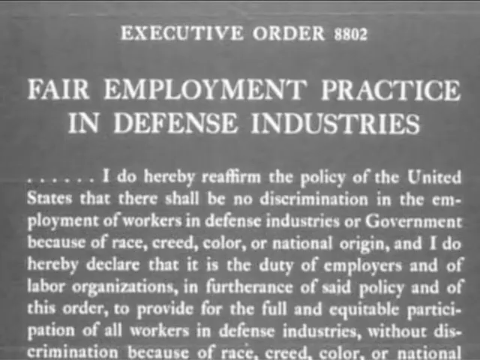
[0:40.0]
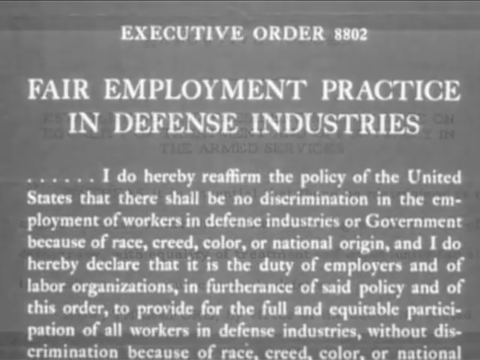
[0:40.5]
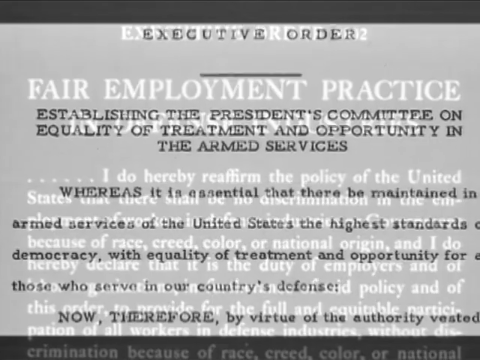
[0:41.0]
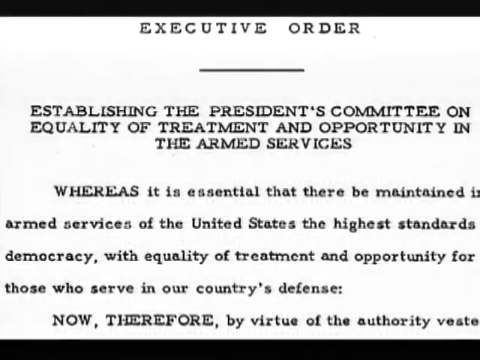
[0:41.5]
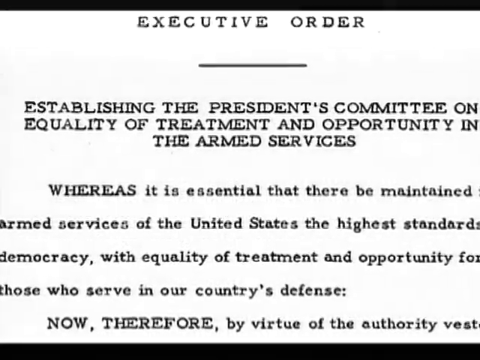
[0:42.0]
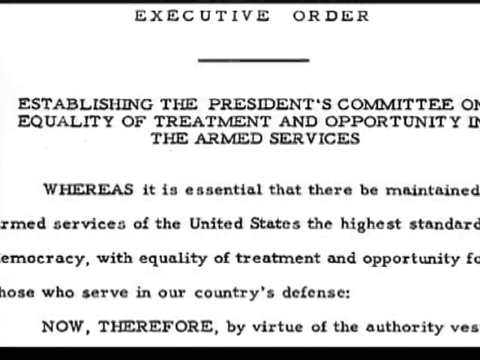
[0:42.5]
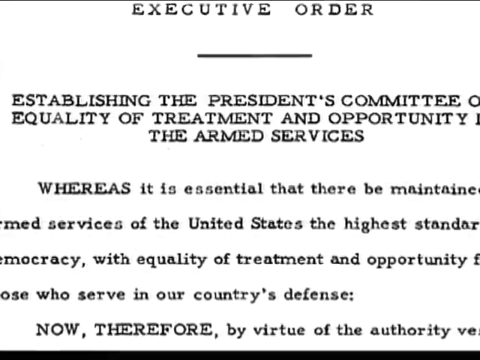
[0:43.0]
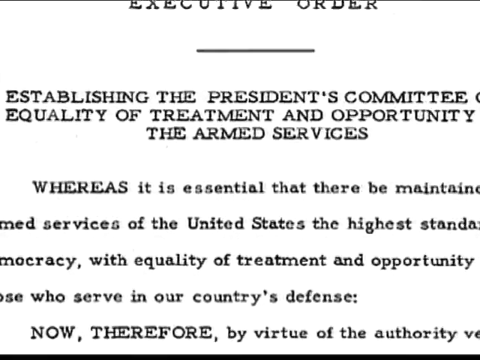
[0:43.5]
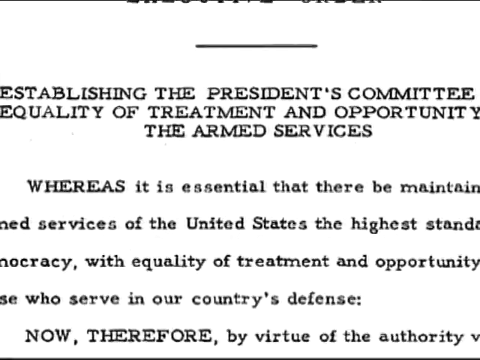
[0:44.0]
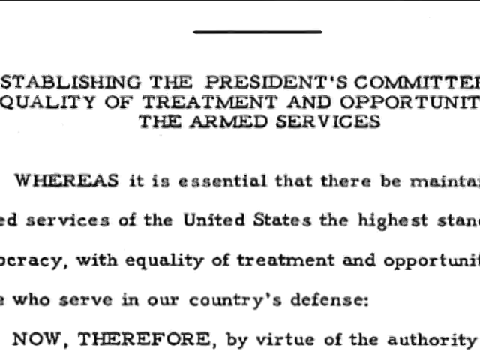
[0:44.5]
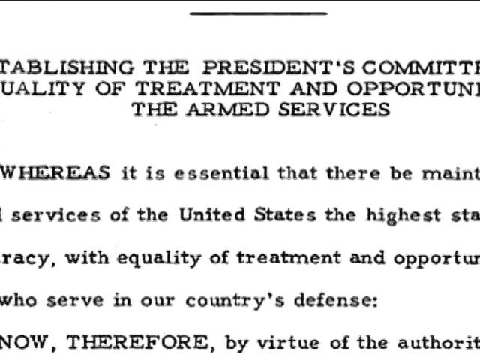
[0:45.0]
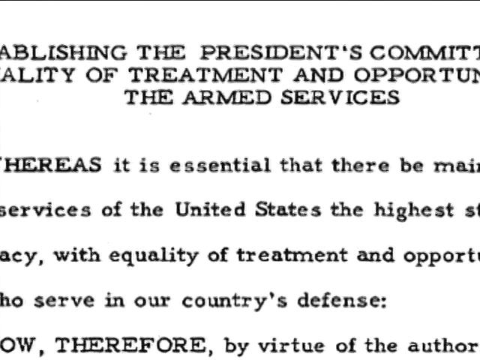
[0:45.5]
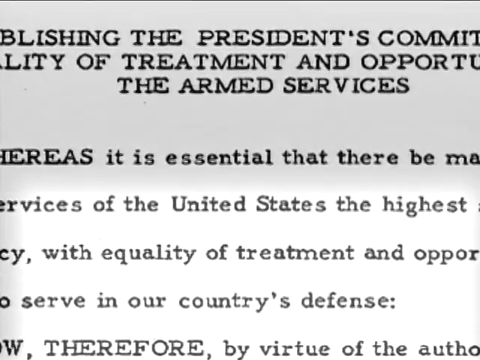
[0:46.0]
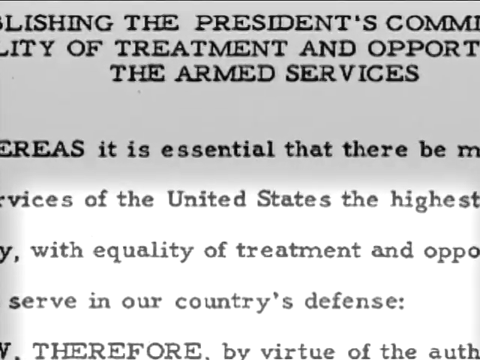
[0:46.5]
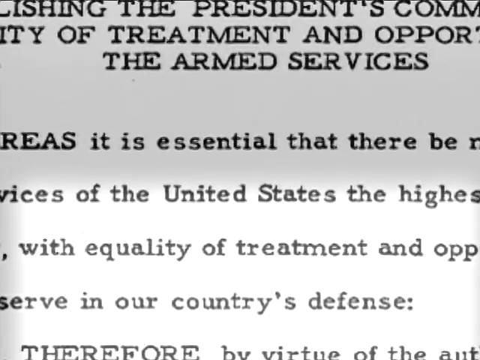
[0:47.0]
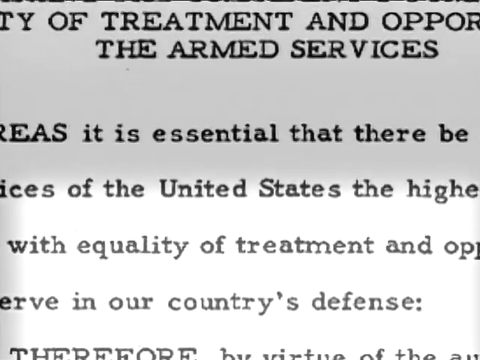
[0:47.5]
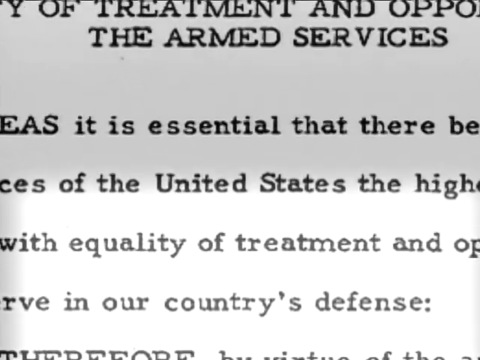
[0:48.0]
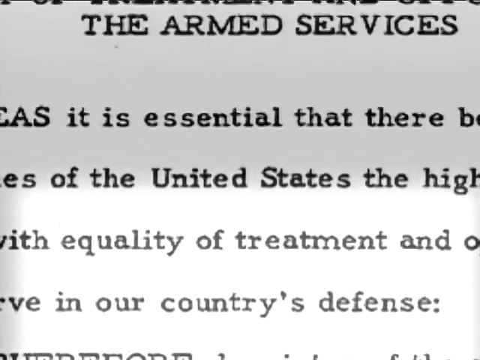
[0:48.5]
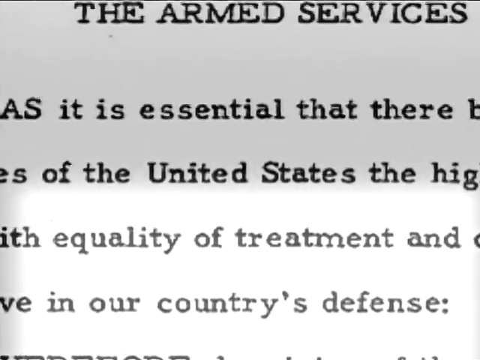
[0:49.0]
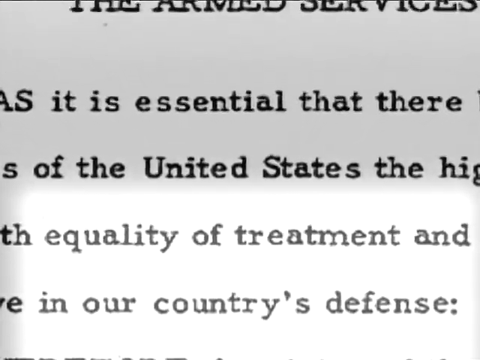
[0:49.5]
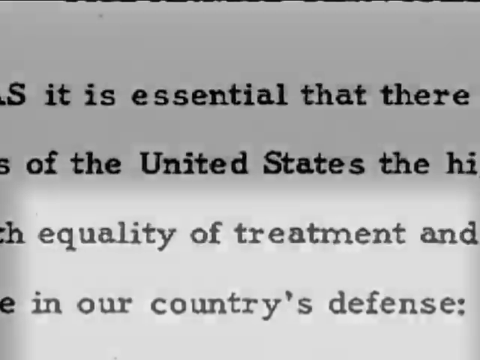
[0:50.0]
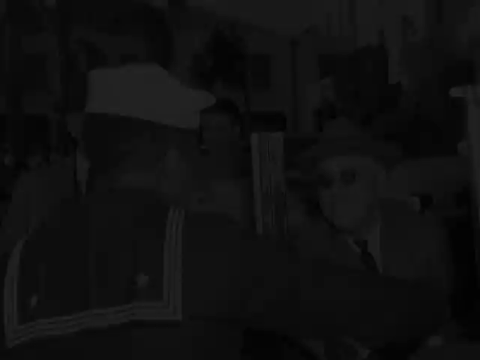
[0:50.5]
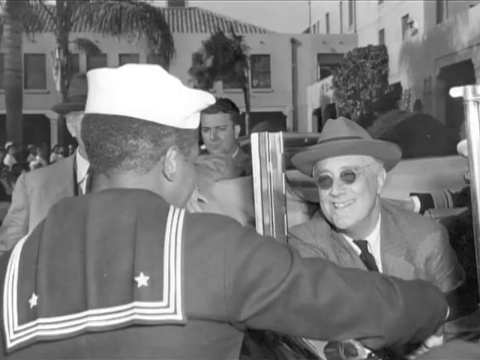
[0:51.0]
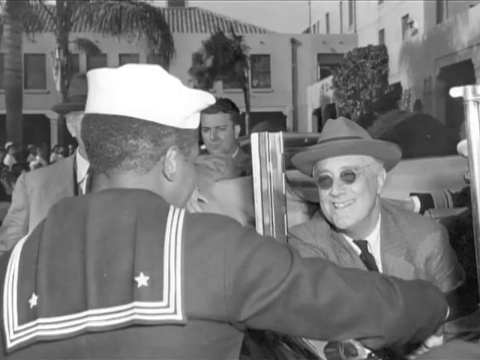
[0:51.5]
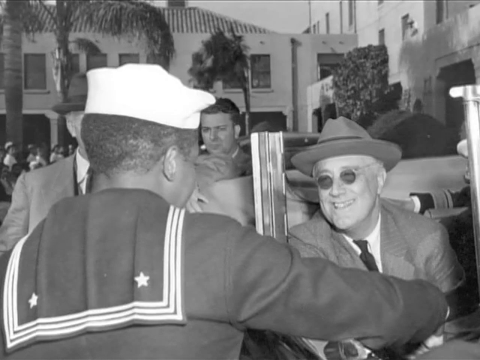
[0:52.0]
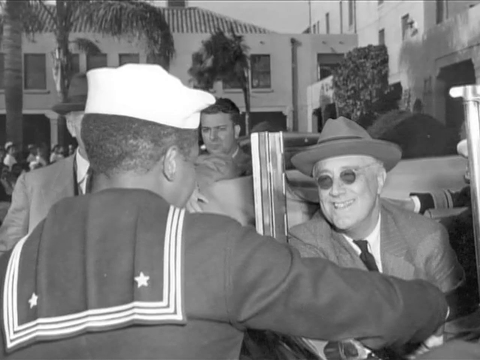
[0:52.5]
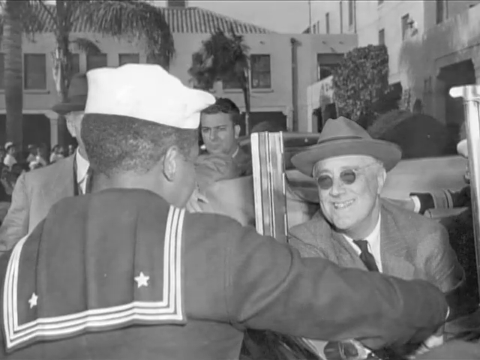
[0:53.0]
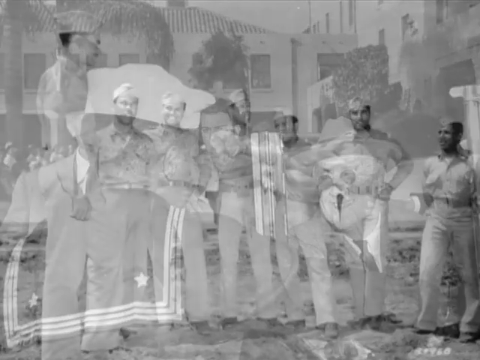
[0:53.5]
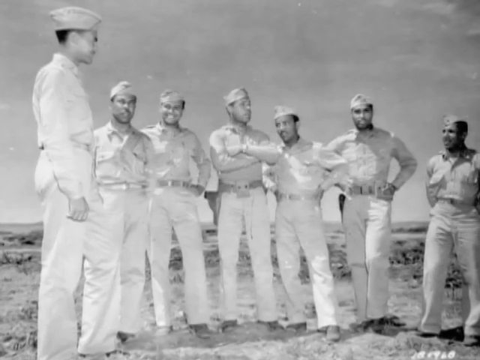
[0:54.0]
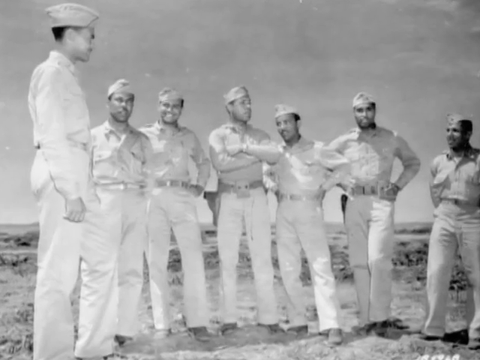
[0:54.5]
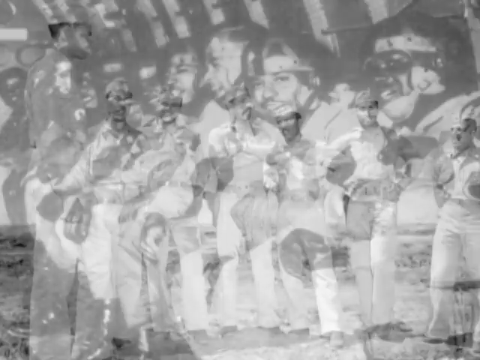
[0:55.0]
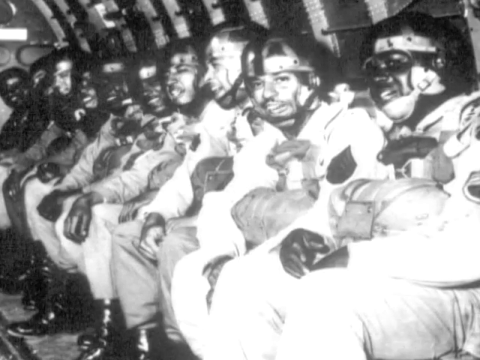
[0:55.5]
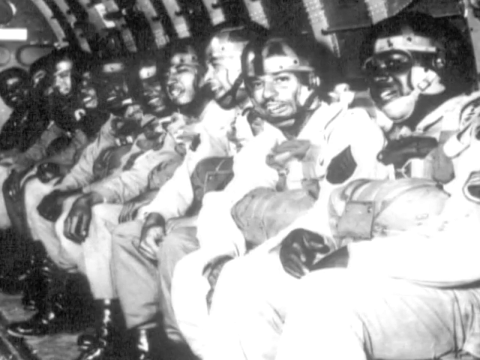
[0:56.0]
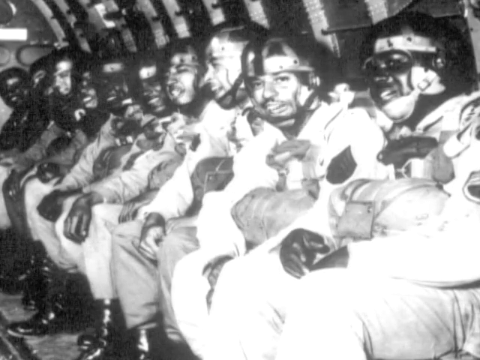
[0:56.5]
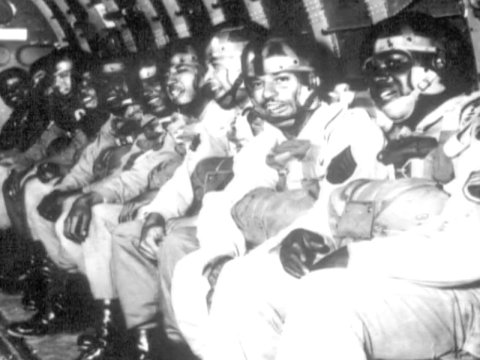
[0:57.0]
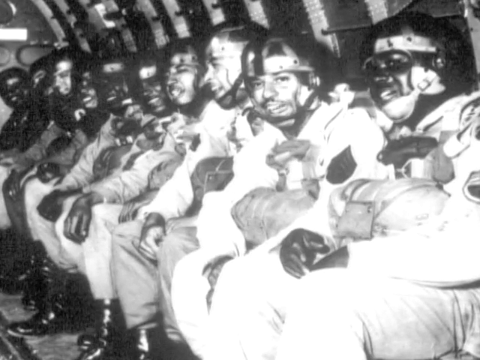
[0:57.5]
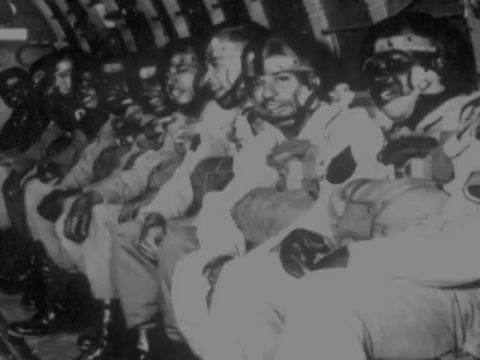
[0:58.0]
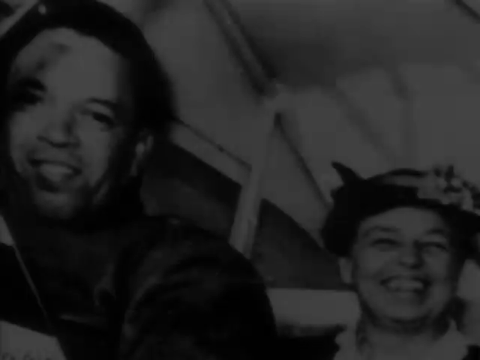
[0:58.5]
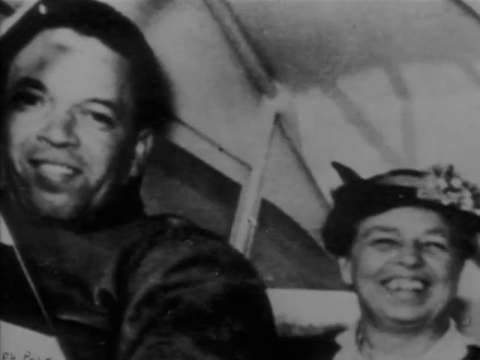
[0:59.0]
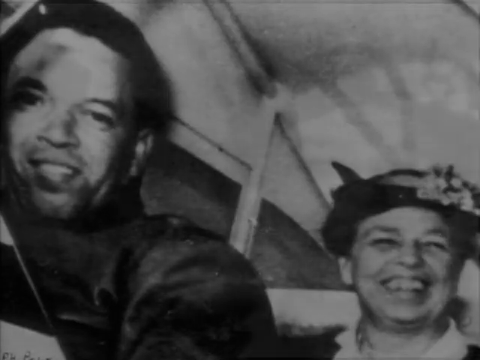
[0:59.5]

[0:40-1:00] Executive order 8802, "Fair Employment Practices in Defense of the Industries", is shown, with text about no discrimination in employing workers in defense industries or government because of race, creed, color and national origin. It also shows text "establishing the President's Committee on Equality" in the armed forces, with further writing about equality between people of different races in the military; "equality of treatment" is highlighted. Roosevelt greets a Black soldier, with buildings in the background; Roosevelt sits in a motorcade or a car, wearing sunglasses and a hat. Black-and-white photos follow, possibly on a sunny day, showing Black soldiers and one person who may be a sergeant, standing and smiling for a picture, then the soldiers in their military setting, some smiling, in pictures possibly taken in a tent. The executive order is then shown again.